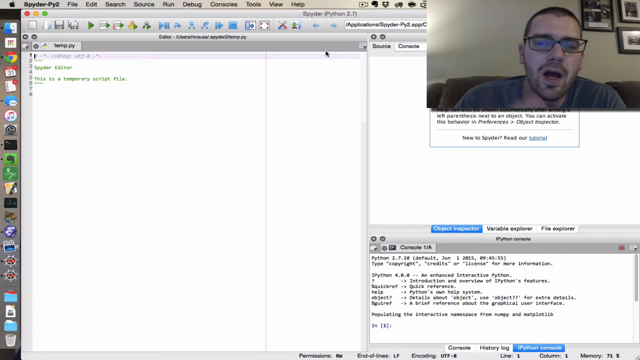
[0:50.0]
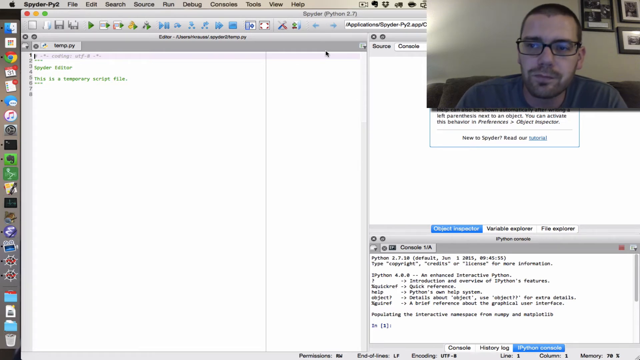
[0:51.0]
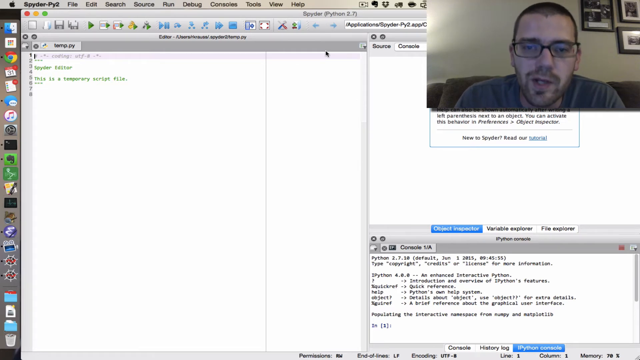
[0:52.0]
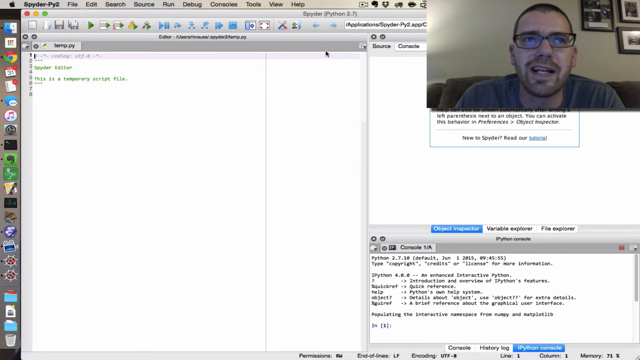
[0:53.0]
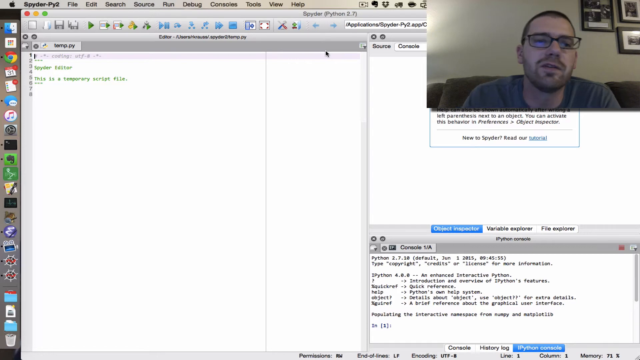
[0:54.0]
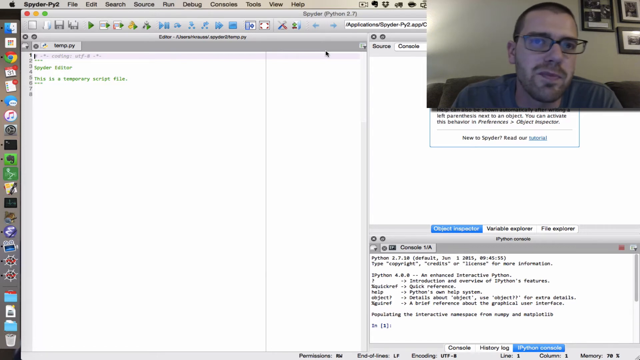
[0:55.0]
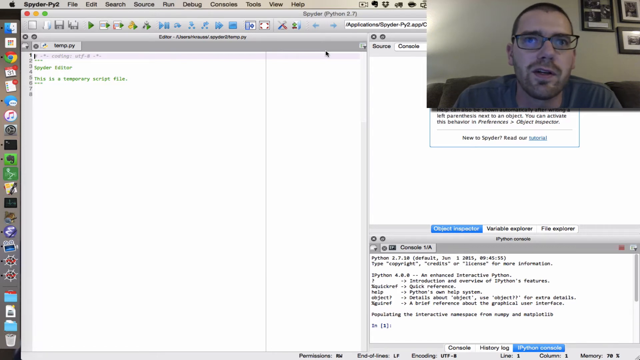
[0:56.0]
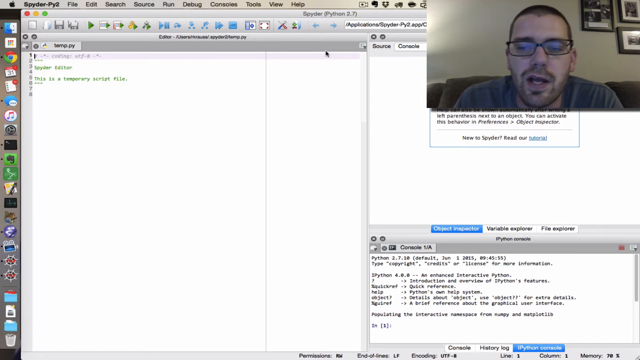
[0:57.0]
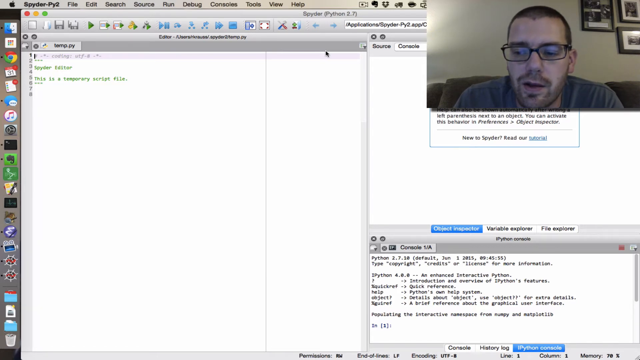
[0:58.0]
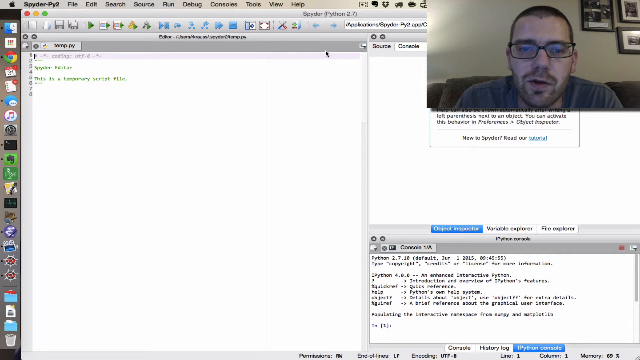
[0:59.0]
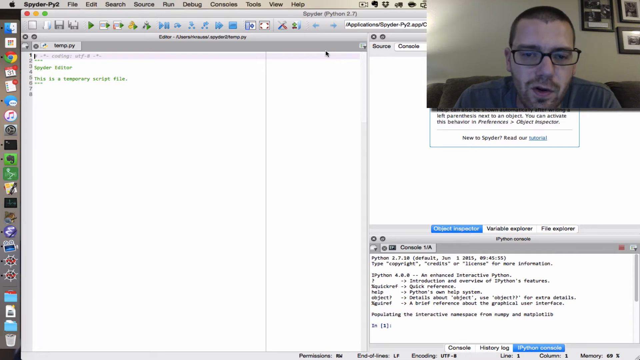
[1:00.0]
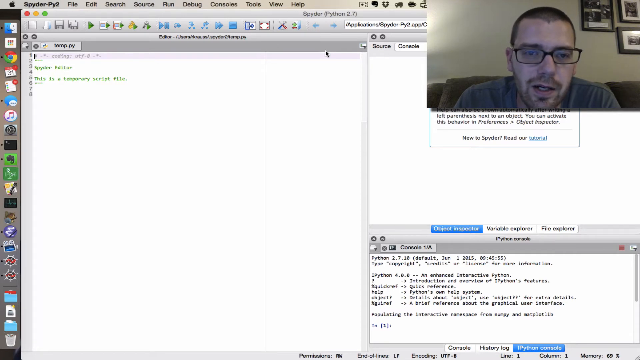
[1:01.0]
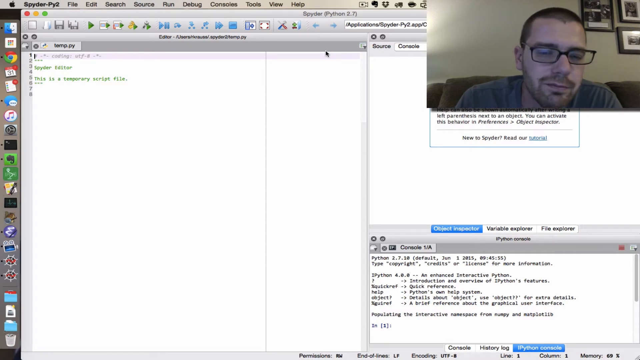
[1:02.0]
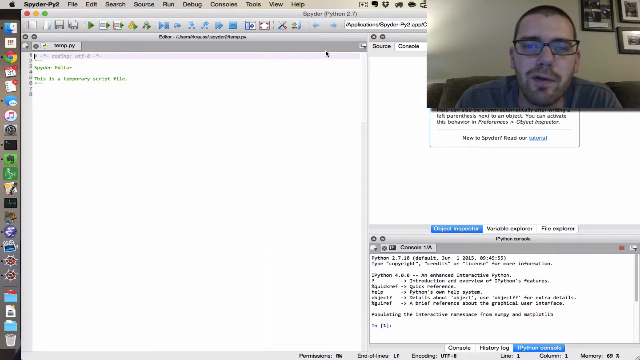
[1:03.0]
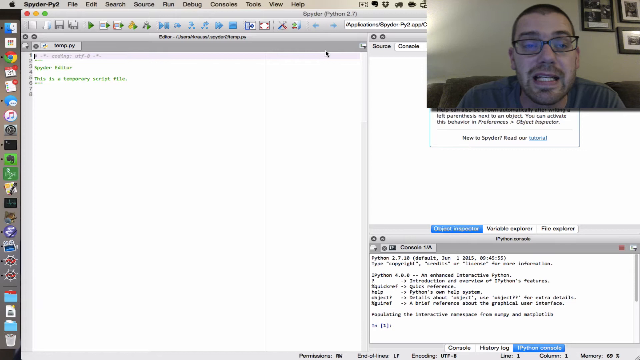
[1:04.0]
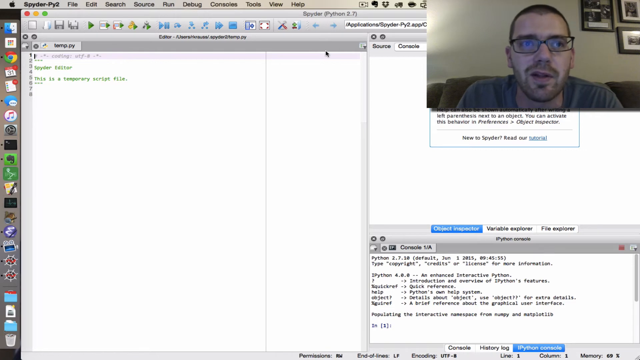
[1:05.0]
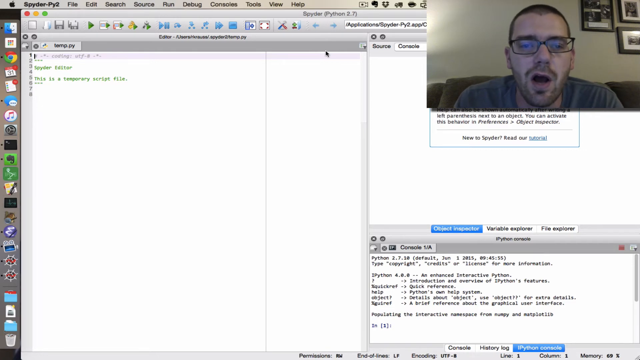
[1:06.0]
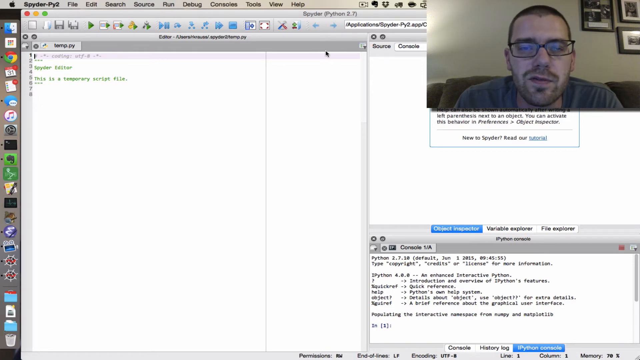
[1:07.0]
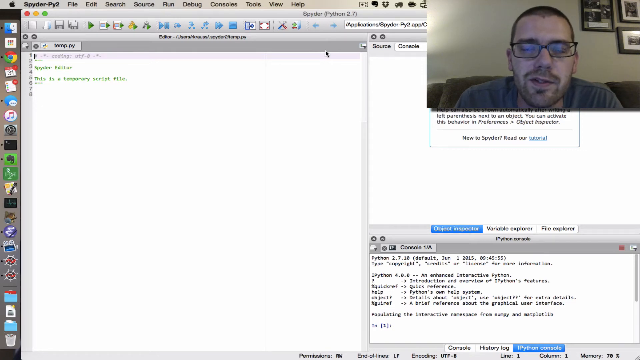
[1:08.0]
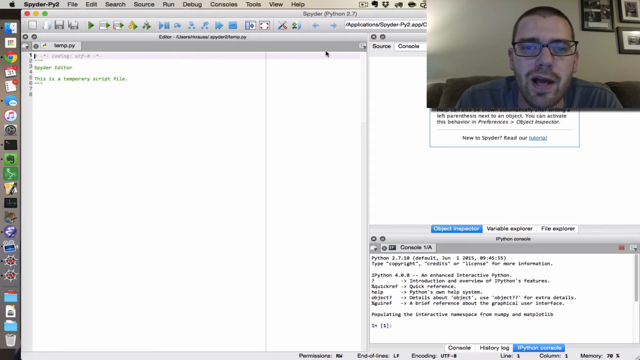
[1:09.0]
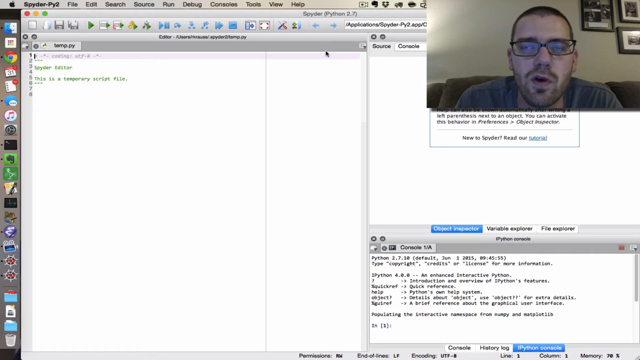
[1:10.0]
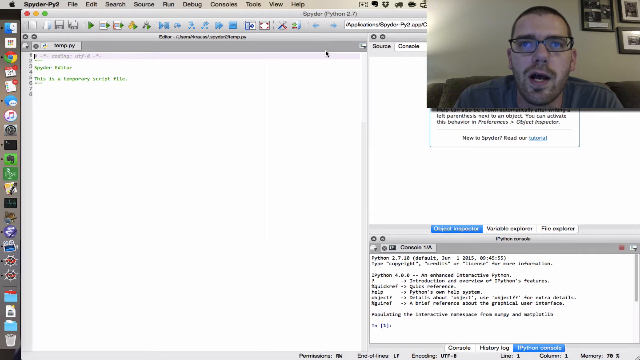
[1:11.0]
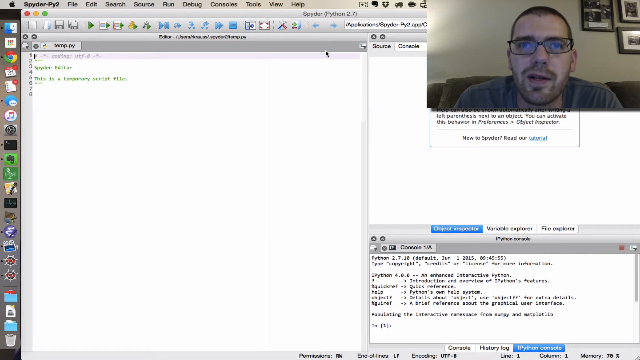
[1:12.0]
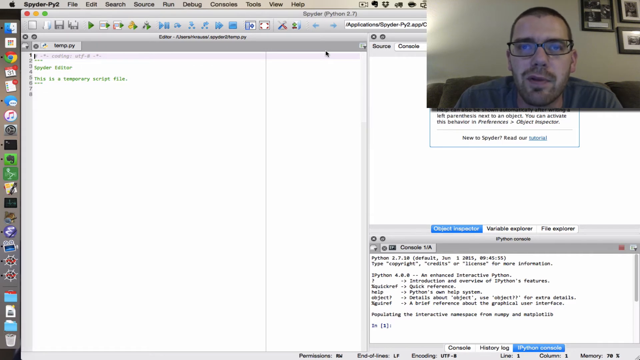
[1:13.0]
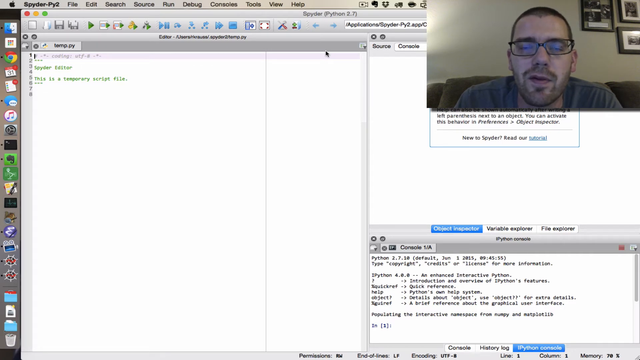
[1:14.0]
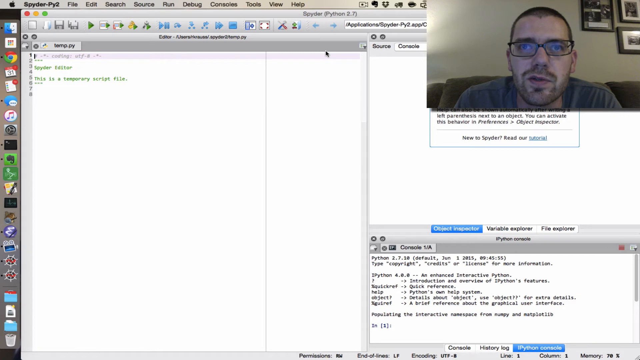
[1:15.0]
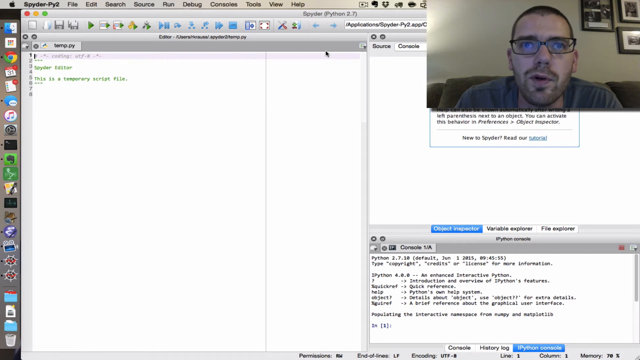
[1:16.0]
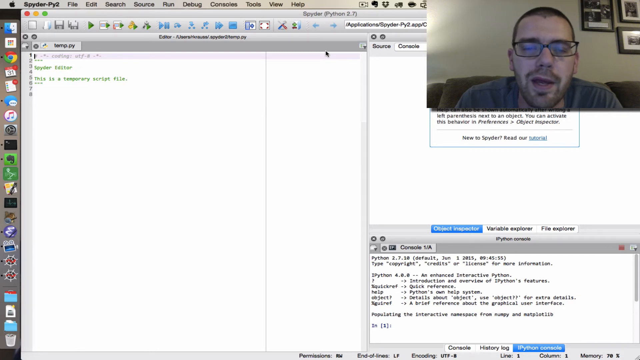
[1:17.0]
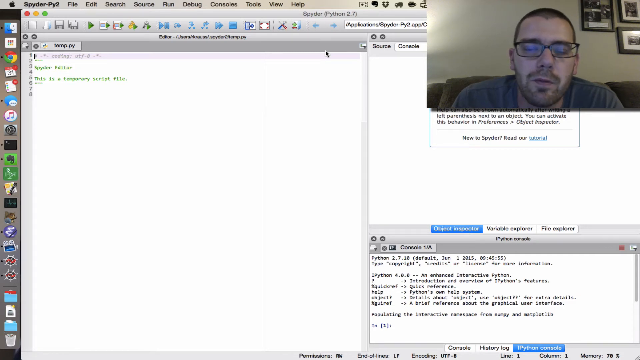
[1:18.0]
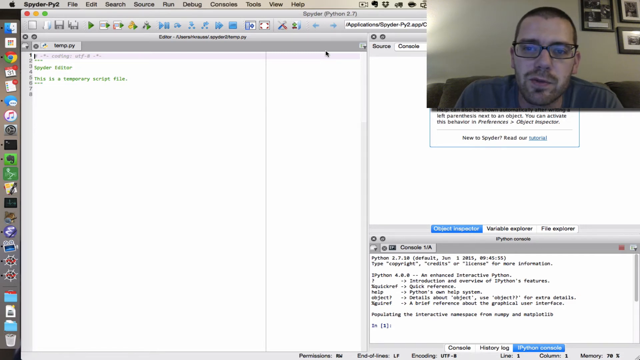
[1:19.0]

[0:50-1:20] He continues talking and rocks back and forth. He appears to be wearing a plain gray shirt, has a little facial hair in a Fu Manchu-looking style, and has really short hair. Nothing changes on the screen; he is talking but not typing anything. Columns of apps are on the left, including Google Chrome, notifications, what looks like a notepad, a calendar and a couple of Spyder icons. The editor tab at the top left is "temp.py". Something is written in lavender, light purple on the first line with the cursor blinking; the second line is "--", followed by a couple more lines of text and "Spyder editor," with a Y, written in green. The video of him is at the top right, and a "New to Spyder" tutorial link is right underneath him, embedded and partly hidden. Underneath that are the Object Inspector in the blue tab, Variable Explorer and File Explorer.